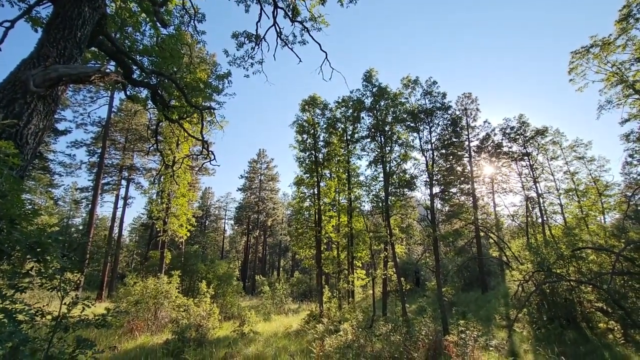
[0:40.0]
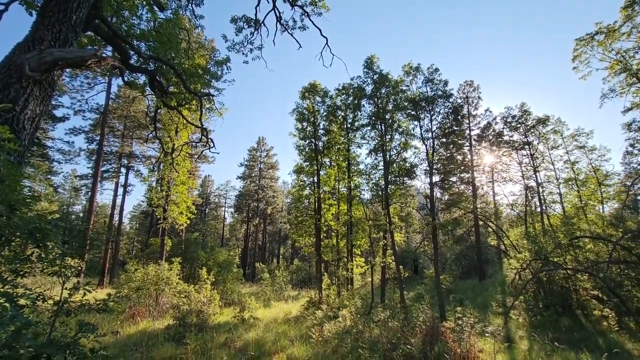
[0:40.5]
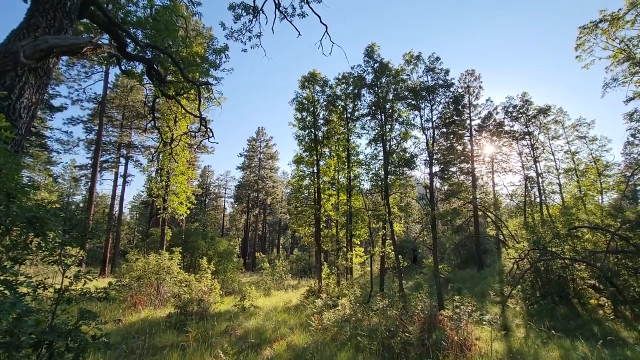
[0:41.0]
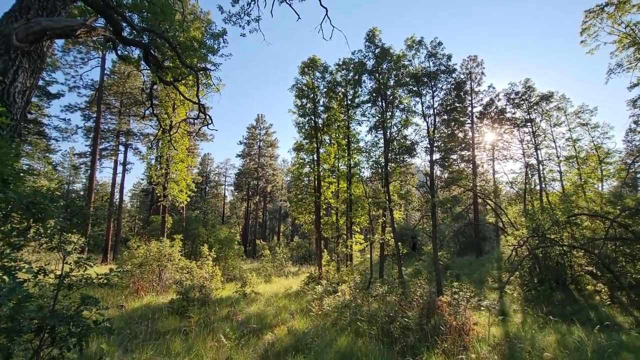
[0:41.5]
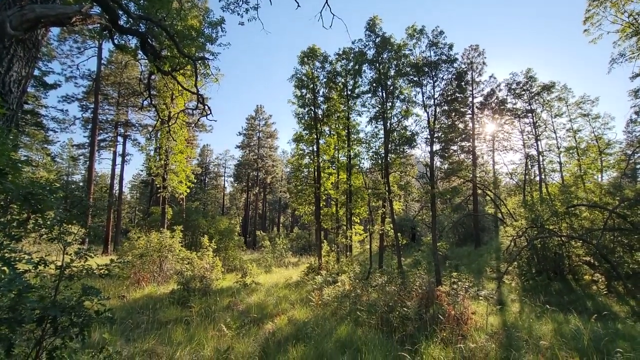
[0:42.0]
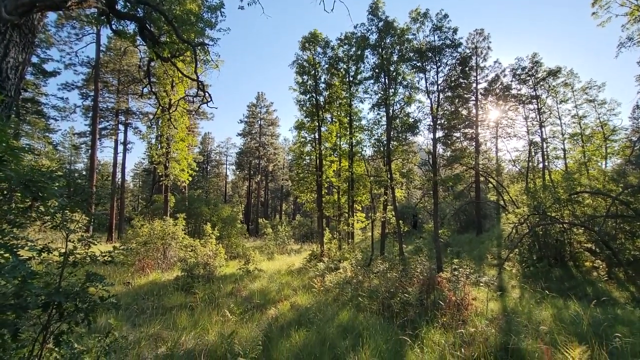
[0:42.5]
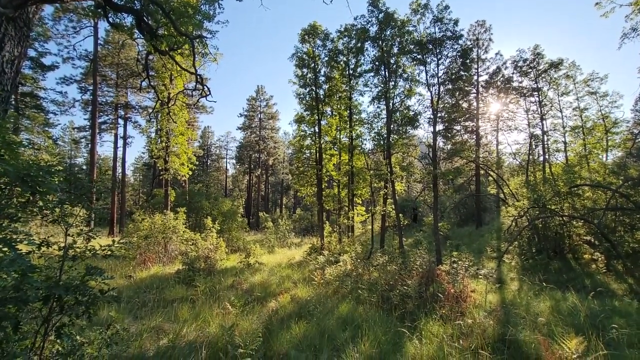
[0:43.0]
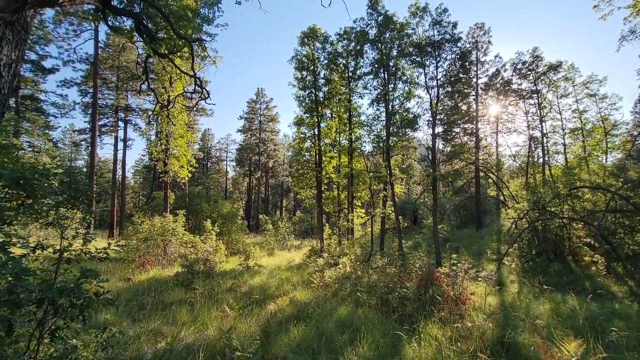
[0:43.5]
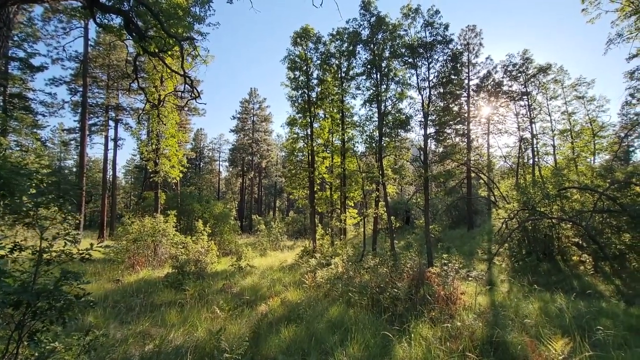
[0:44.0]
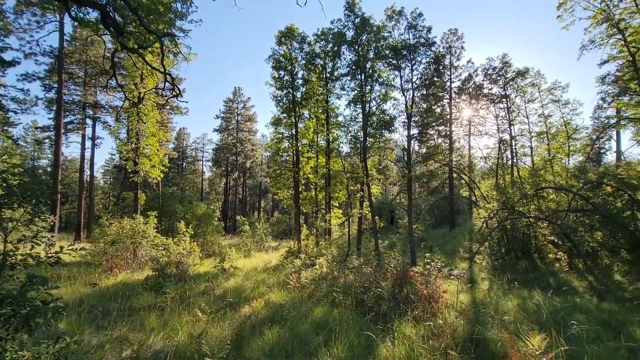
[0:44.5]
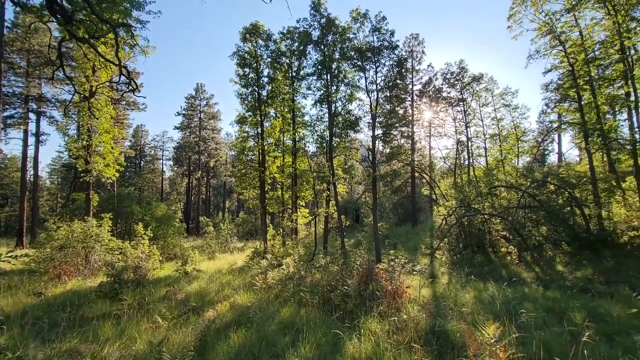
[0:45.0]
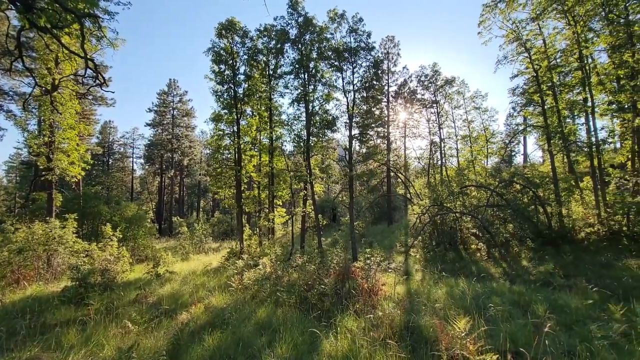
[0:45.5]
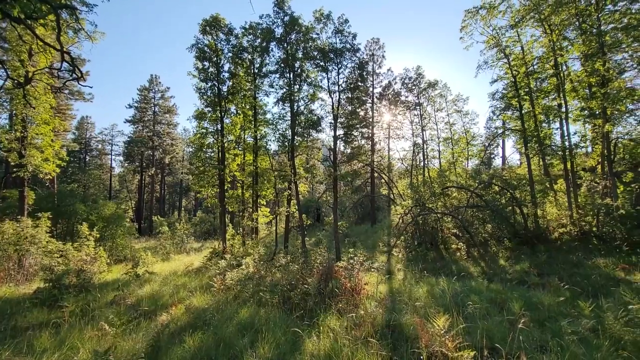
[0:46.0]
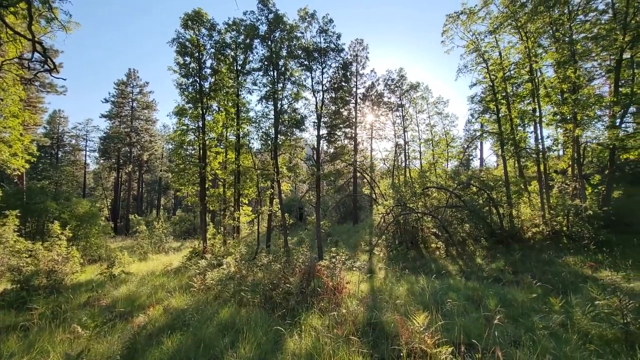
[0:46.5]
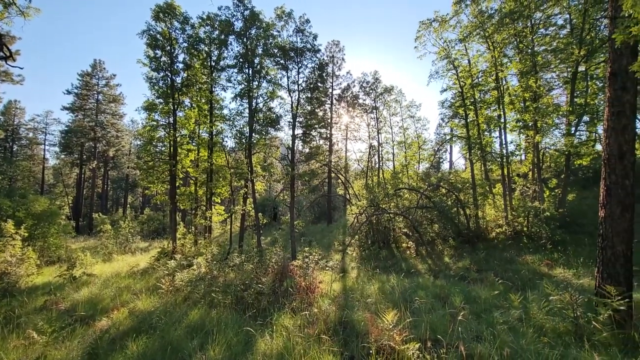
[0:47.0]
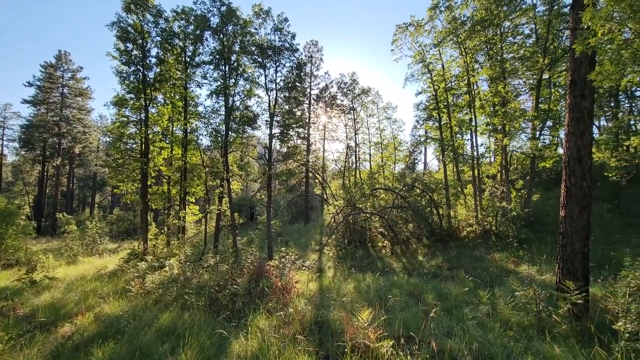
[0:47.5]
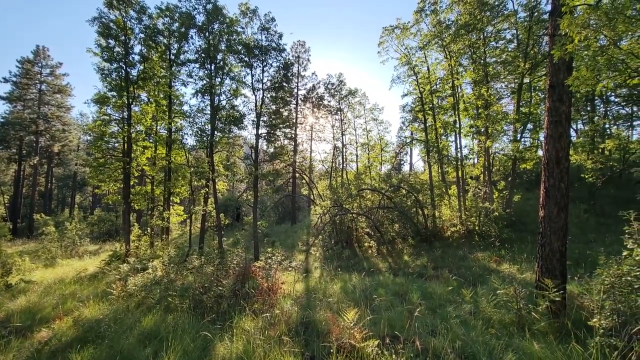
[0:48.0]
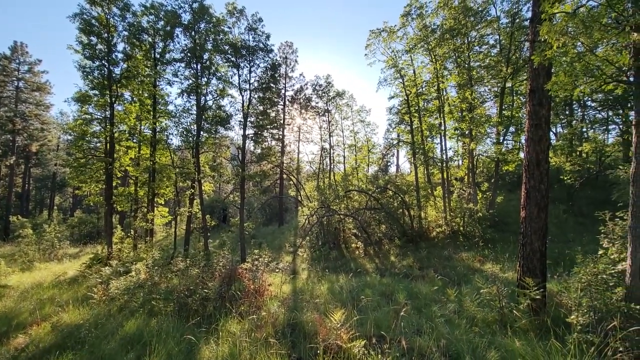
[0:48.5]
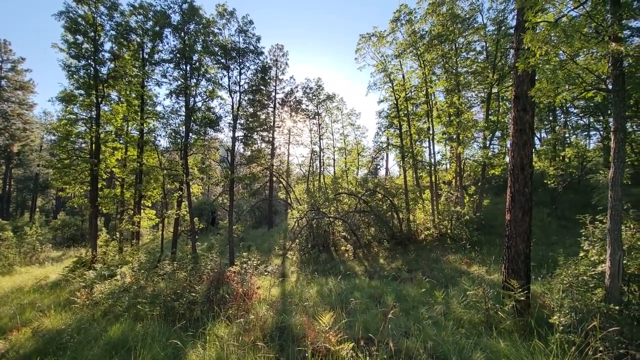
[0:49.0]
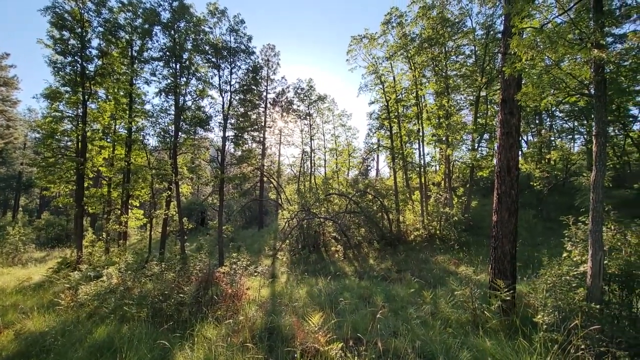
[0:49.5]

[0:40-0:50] The camera person remains in a stationary spot in a clearing in the center of a forested area. The sky is bright blue, and the sun is now peeking through between the trees. Many other trees are very tall and very skinny, with green leaves. The grass is brown in areas and green in others. There are some viney plants all the way to the right, and some thicker trees. The camera pans down some and continues to the right very fluidly and smoothly. Shadows cast by the trees are now visible, due to the sun being at an angle behind the trees.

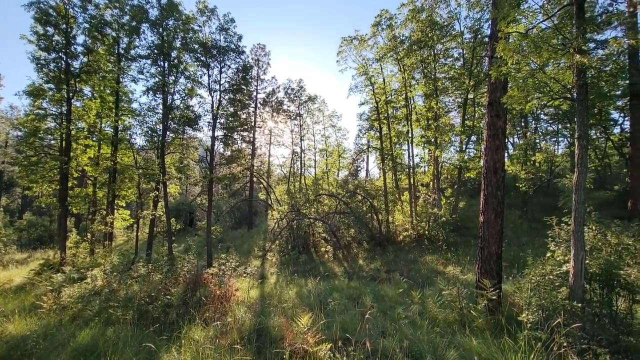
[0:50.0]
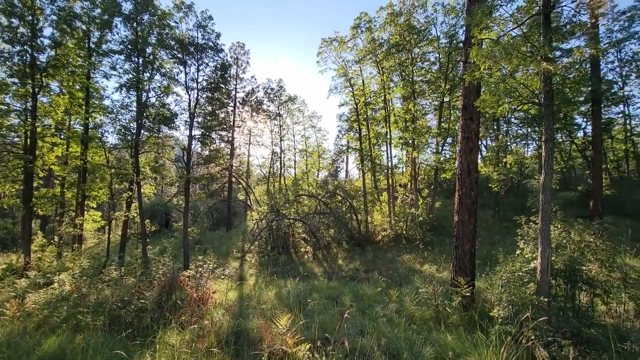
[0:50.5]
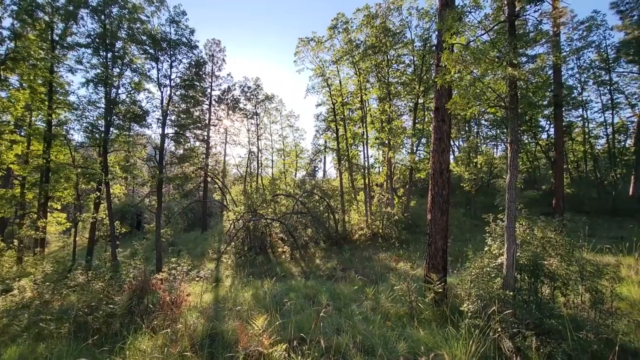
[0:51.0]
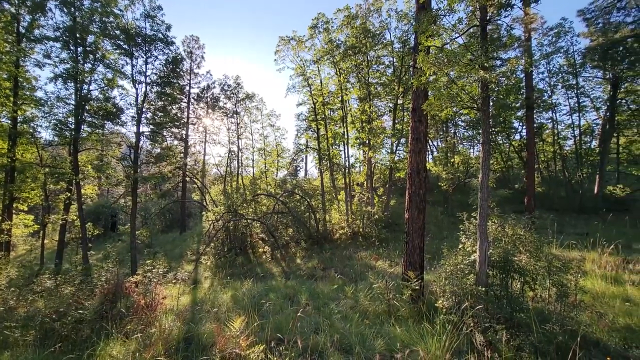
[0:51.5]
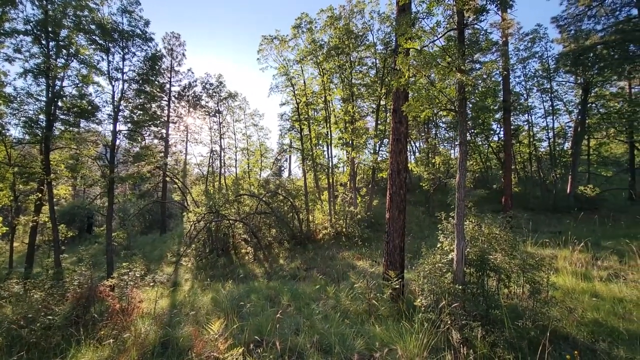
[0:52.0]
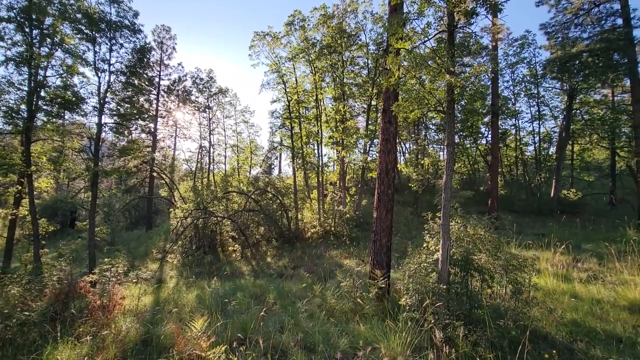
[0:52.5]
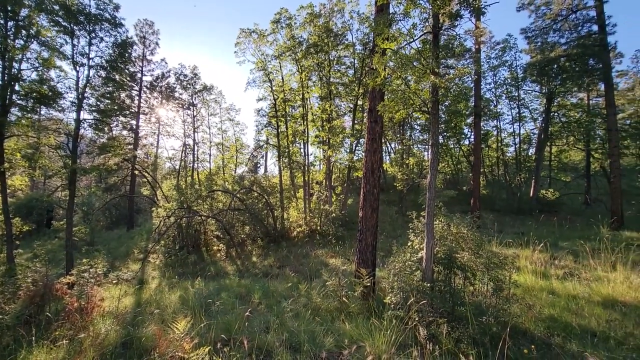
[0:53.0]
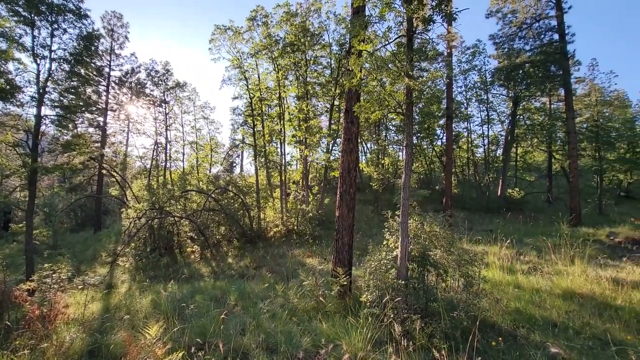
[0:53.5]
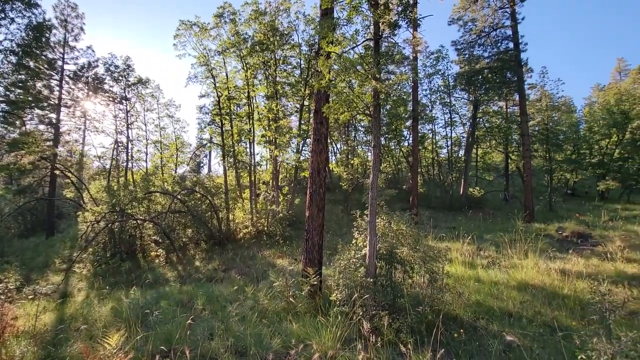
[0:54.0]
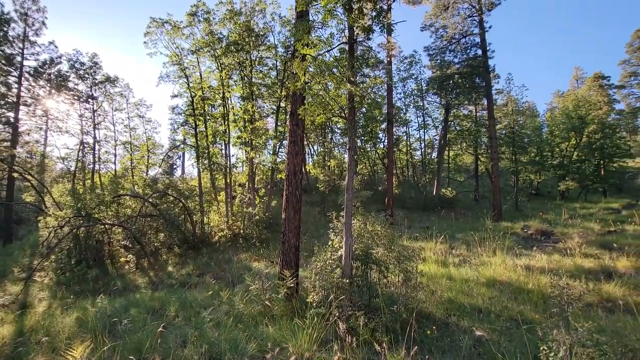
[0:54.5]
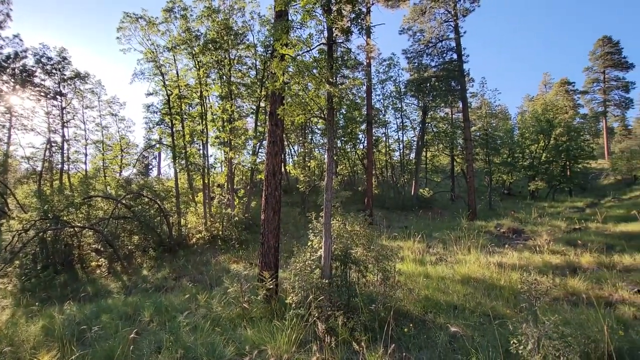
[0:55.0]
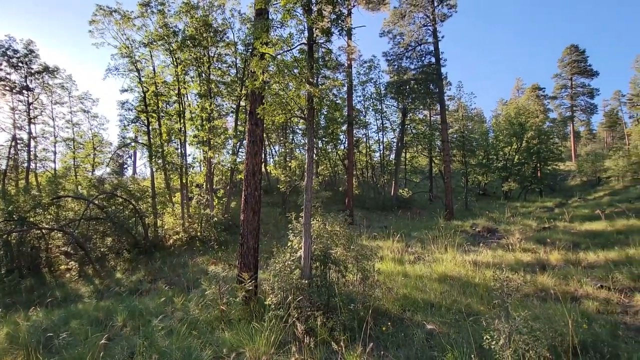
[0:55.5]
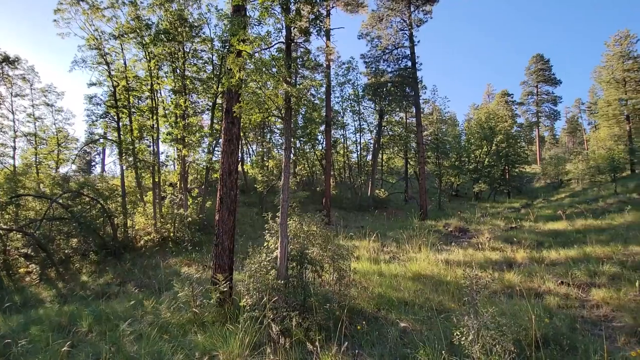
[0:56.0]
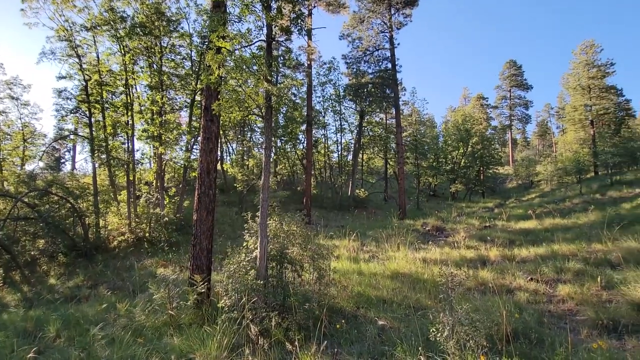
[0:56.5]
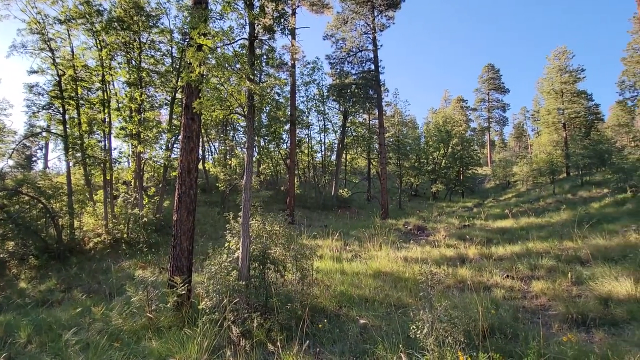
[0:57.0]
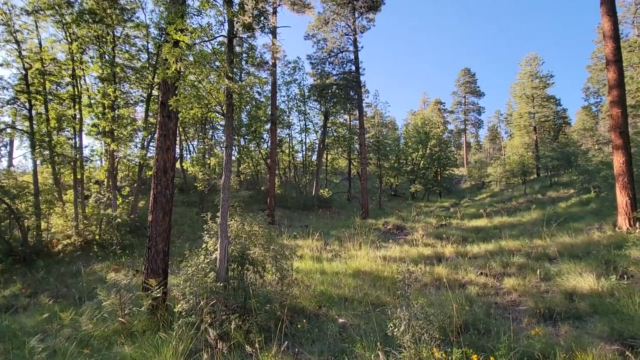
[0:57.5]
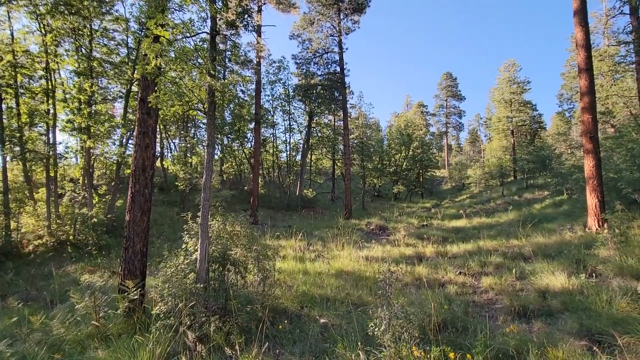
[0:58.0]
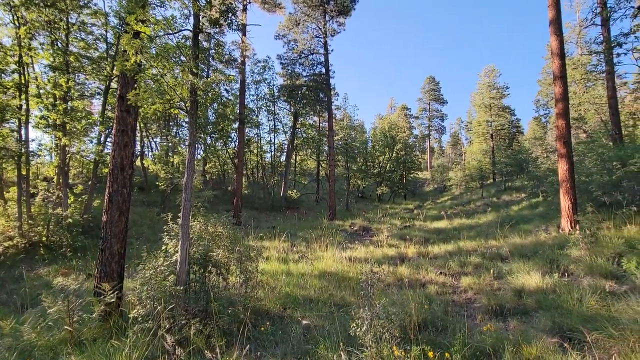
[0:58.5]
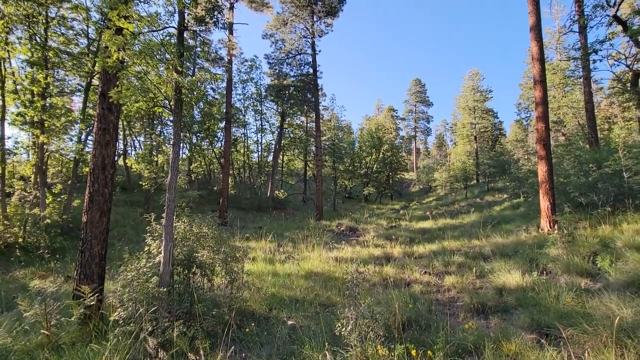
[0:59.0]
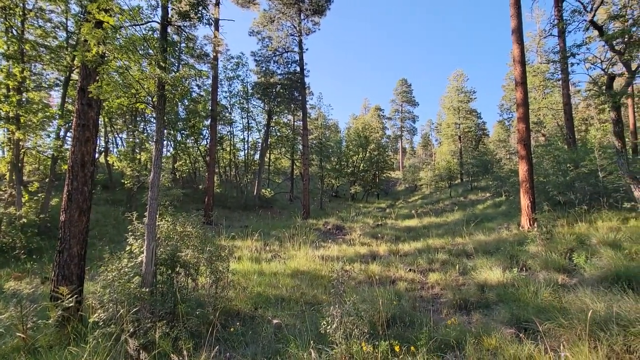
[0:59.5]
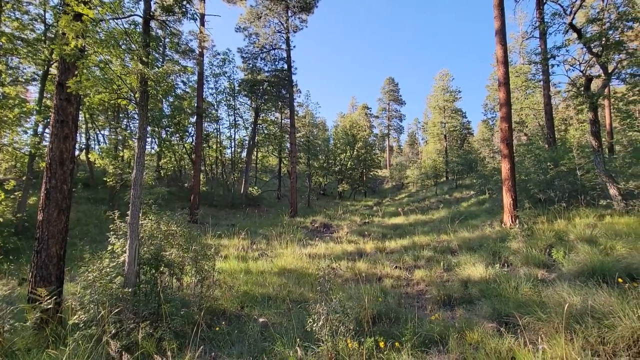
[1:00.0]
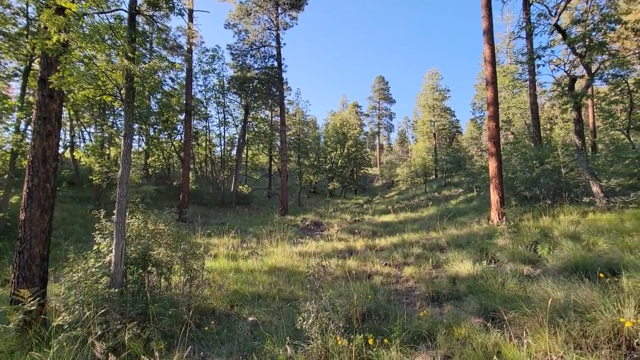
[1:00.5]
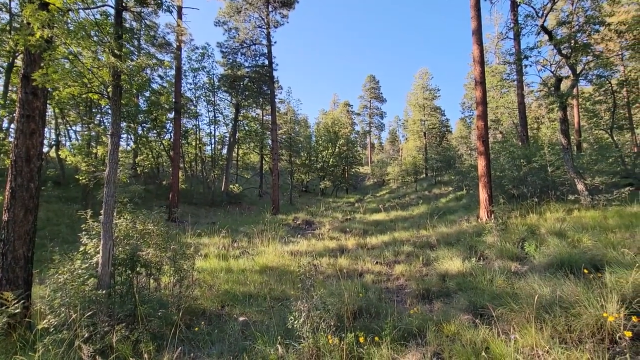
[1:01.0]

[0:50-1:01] The cameraman is still stationary in a cleared area in a forested area. The sky is bright and sunny, bright blue with not a single cloud. The grass is green in some areas and brown in others. There are bushes and trees; some of the trees are very tall and skinny and others are thicker. The camera continues to pan very fluidly to the right, and the sun is now toward the left. Some taller trees appear ahead, along with a thicker redwood-type tree. The camera stops in what seems to be the exact position where it started.